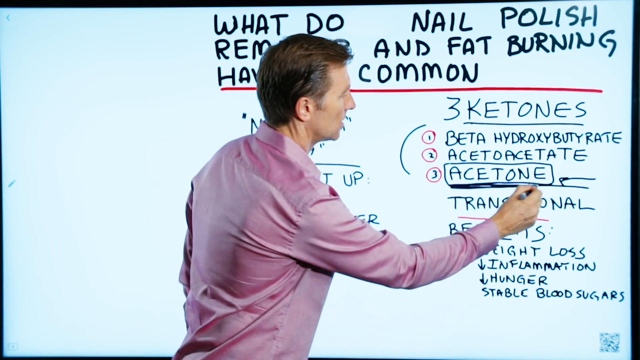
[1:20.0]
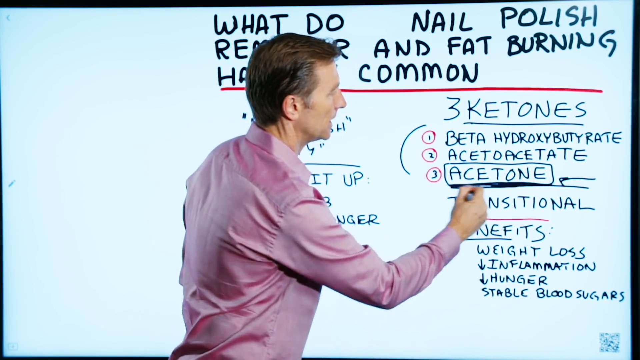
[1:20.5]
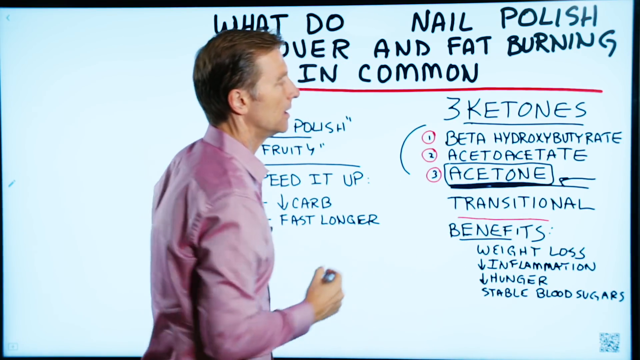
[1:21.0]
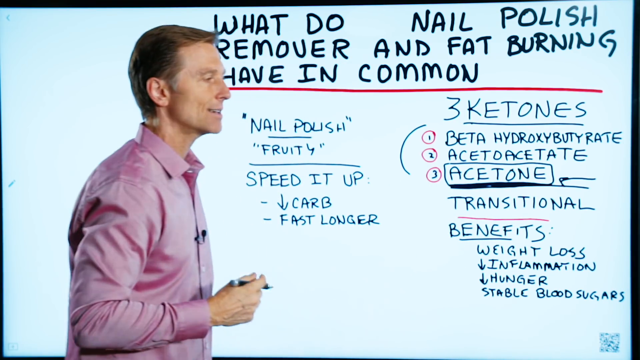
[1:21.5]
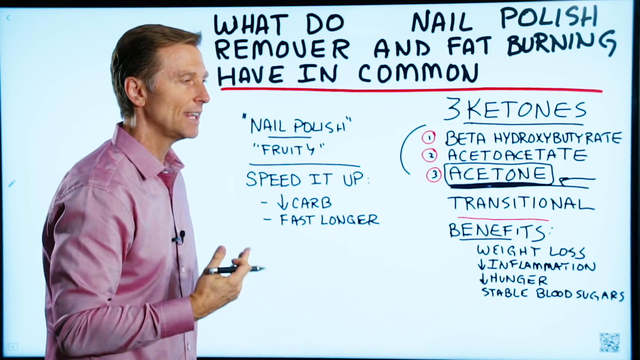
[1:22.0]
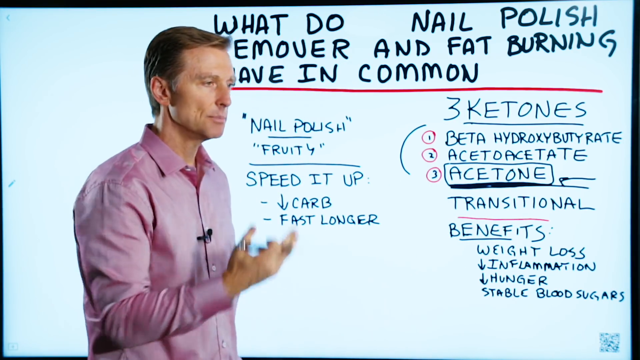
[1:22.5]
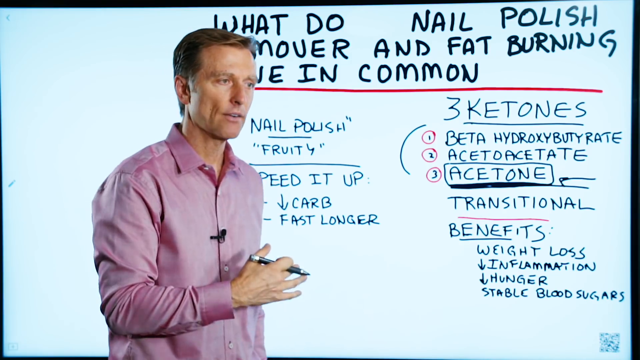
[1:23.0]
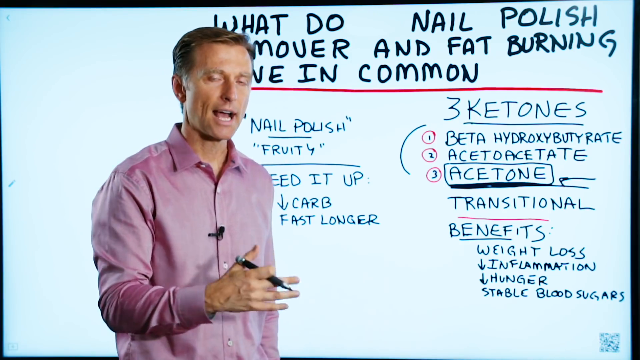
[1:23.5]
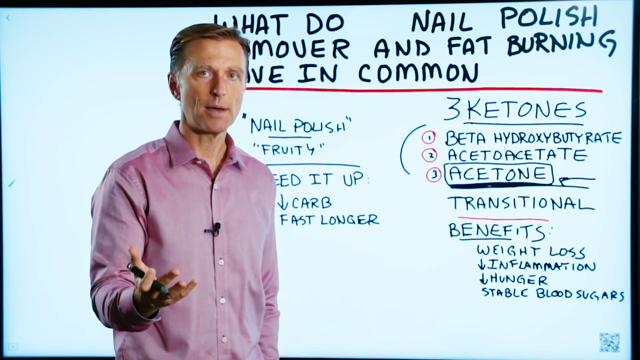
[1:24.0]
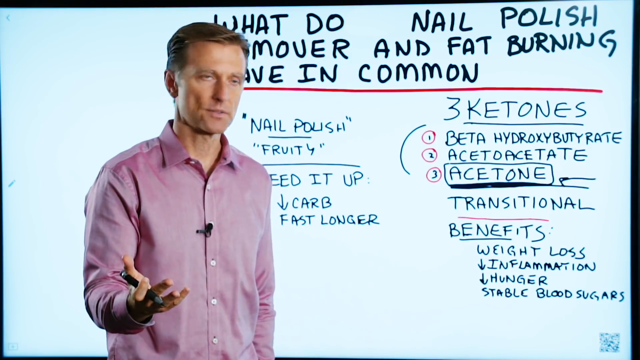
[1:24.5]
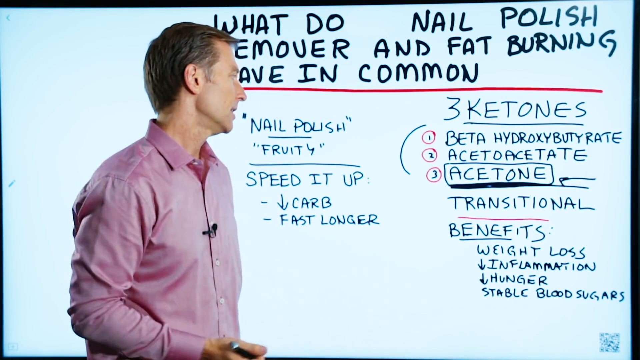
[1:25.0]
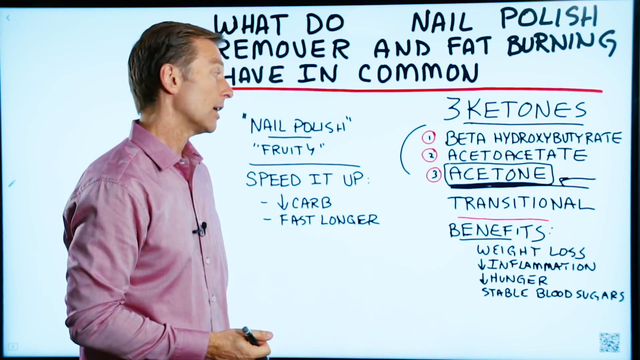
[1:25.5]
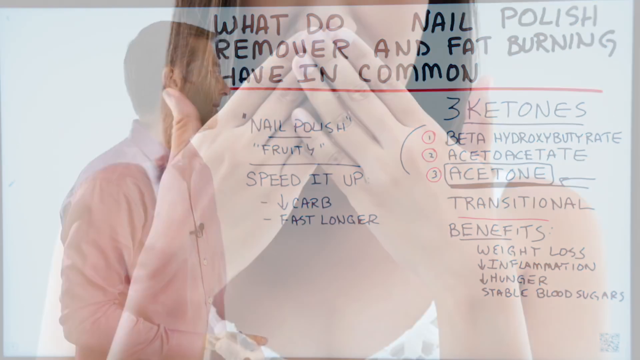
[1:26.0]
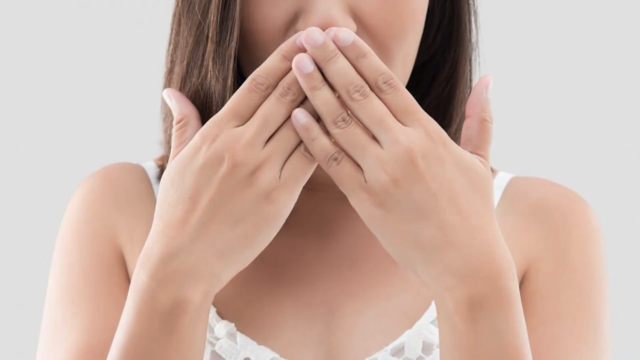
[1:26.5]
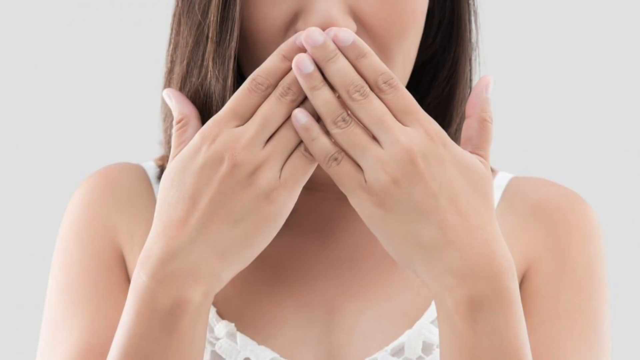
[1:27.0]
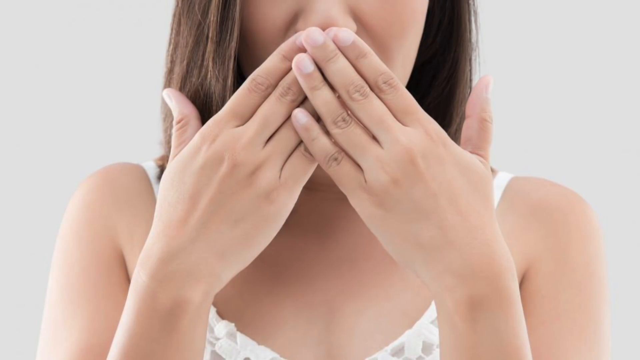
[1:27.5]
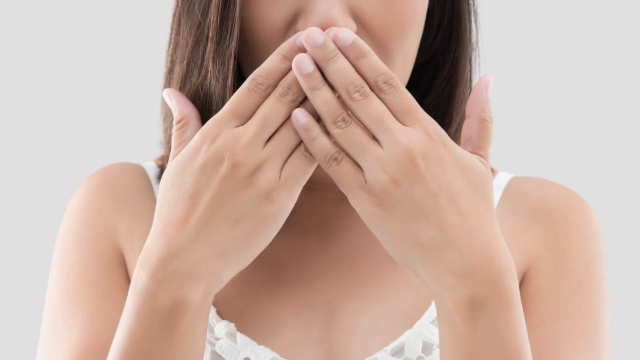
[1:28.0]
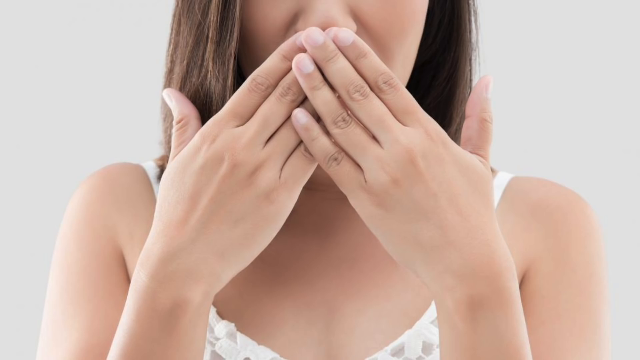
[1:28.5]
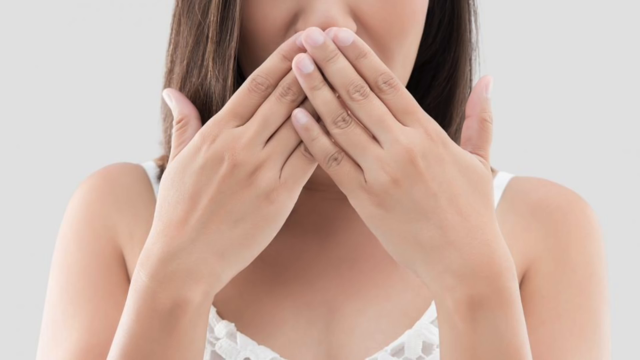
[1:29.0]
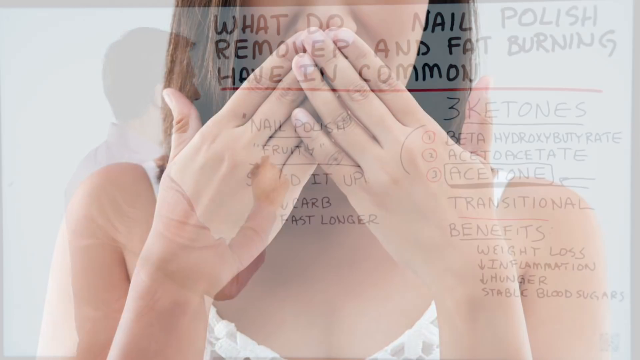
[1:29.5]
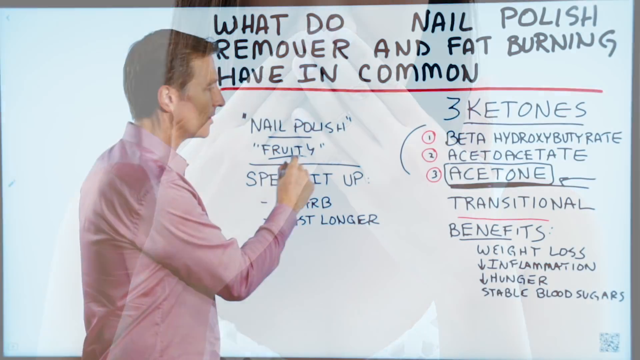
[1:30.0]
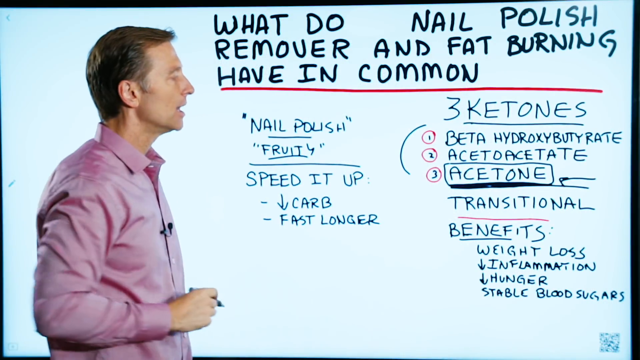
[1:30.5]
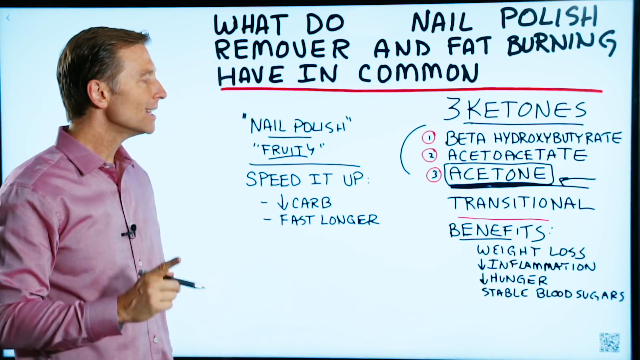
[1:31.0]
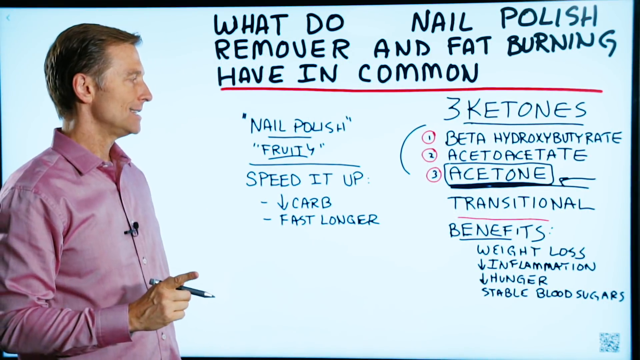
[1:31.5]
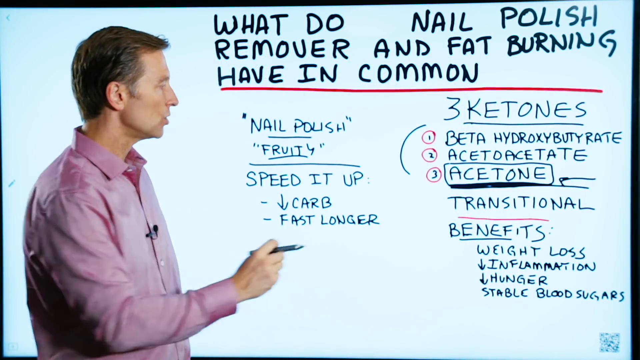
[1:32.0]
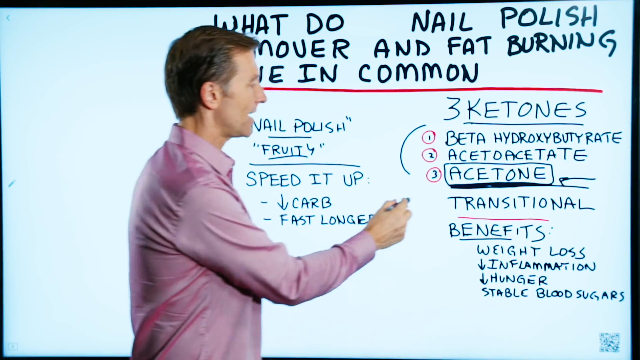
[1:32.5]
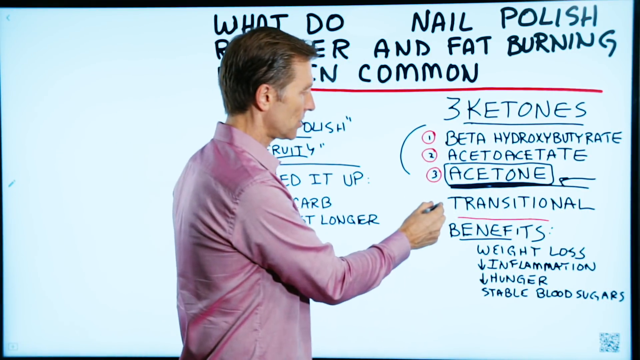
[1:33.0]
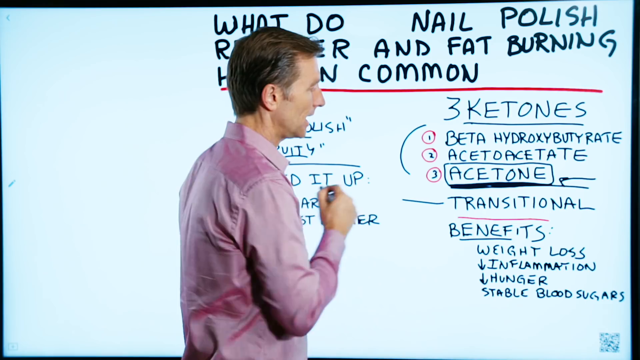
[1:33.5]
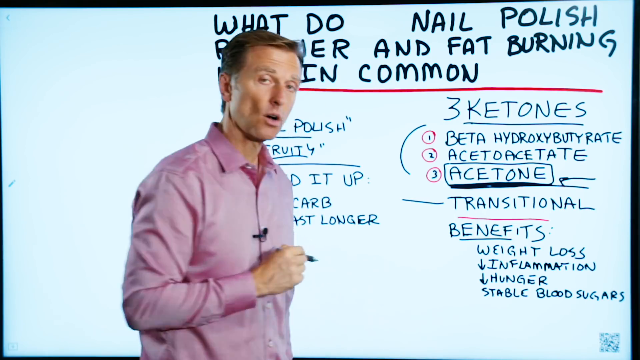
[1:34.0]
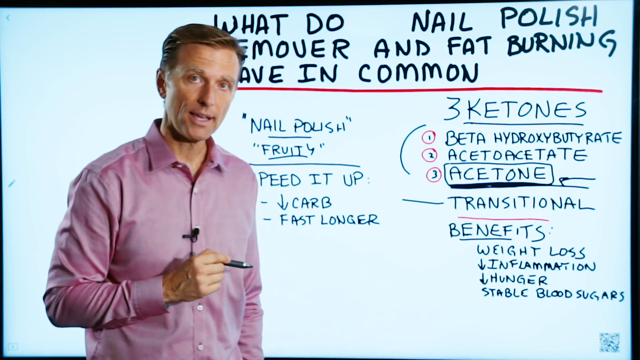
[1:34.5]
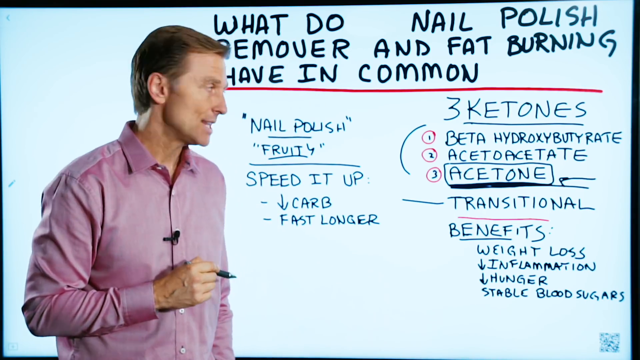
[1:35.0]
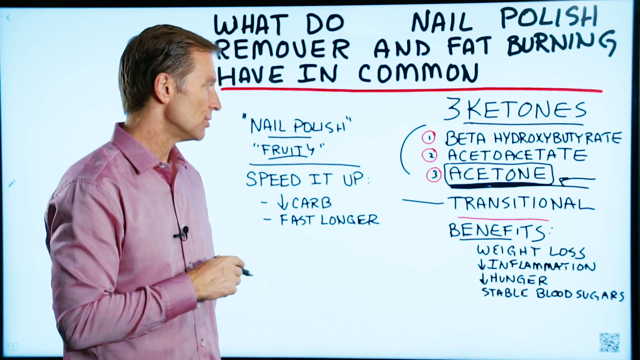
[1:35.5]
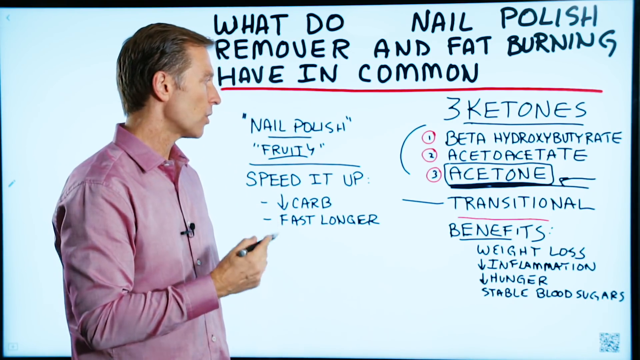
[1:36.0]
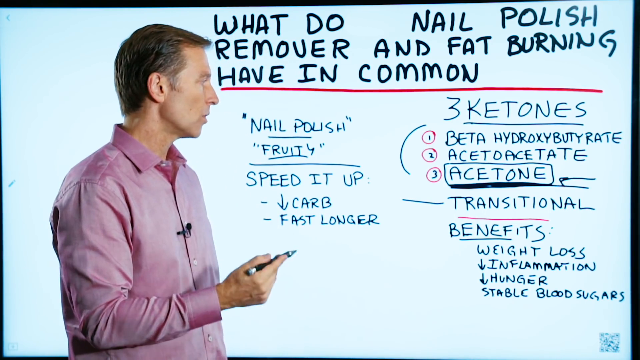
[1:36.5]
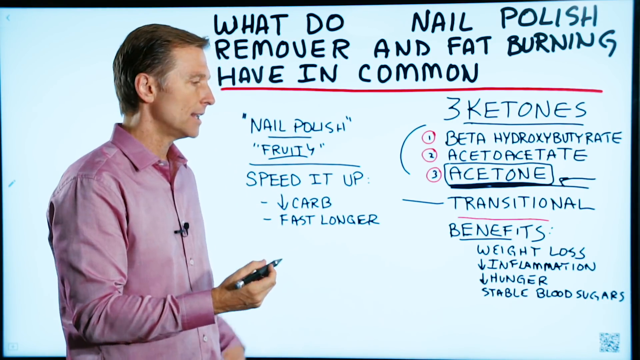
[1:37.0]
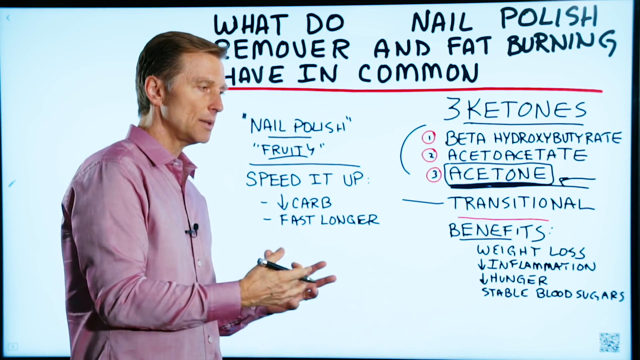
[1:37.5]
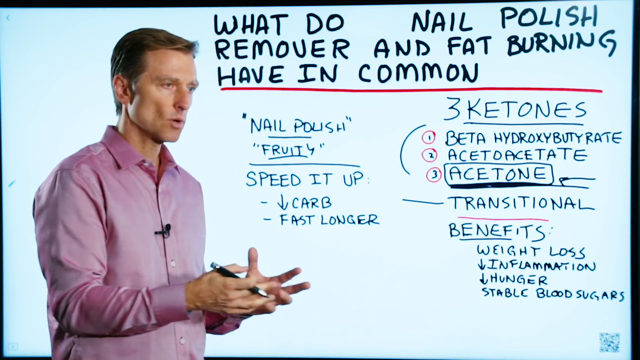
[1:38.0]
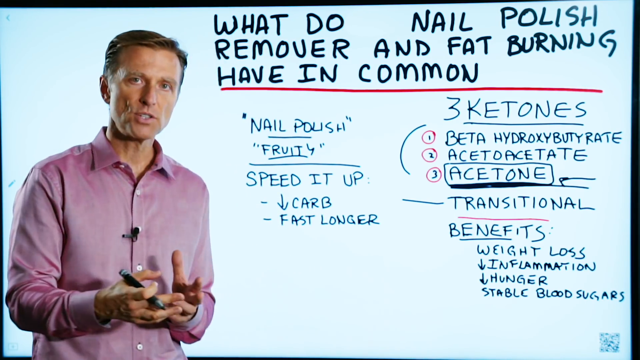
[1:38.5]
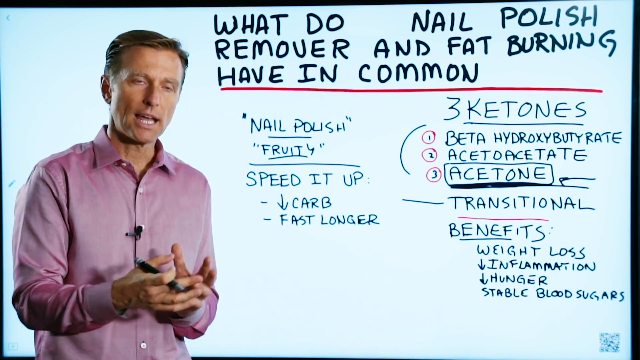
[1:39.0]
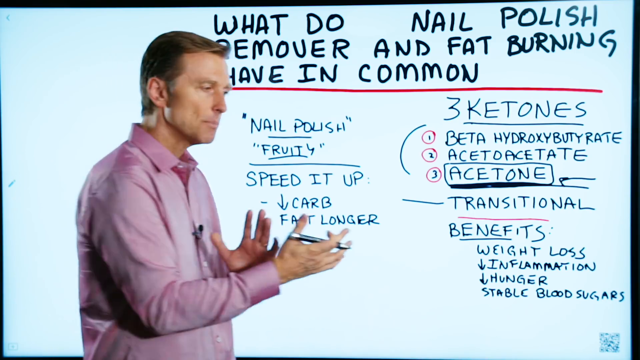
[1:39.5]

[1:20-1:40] The presenter emphasizes acetone, underlining it again with the pen in his right hand, and makes rapid, sort of grand gestures with that hand while looking back and forth between the board and the camera. The video switches to a still image of a Caucasian woman with light brown hair in a white tank top; her face is not visible, and both of her hands cover the base of her nose and her mouth. Back with the presenter, still facing the board and holding his pen, he underlines the word "fruity", written in quotation marks, on the left side, and adds a mark to the left of the word "transitional" on the right. He quickly looks at the camera, then turns back to the board, moving both hands in a sort of rhythmic motion, with more emphasis from his right hand.